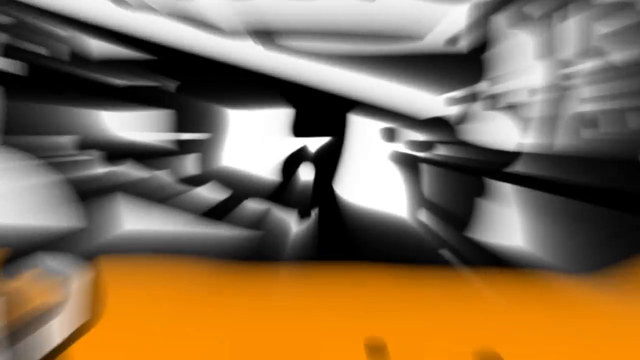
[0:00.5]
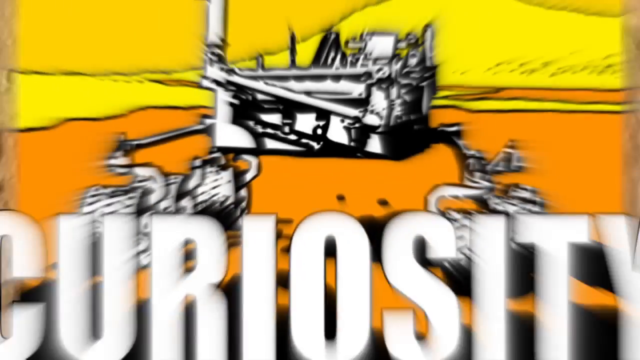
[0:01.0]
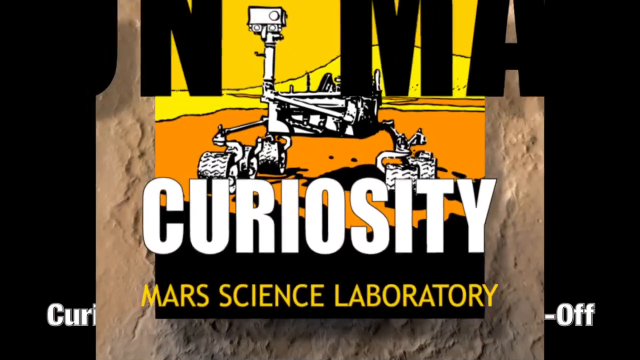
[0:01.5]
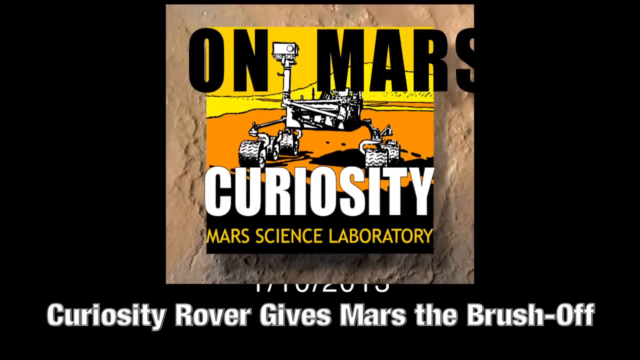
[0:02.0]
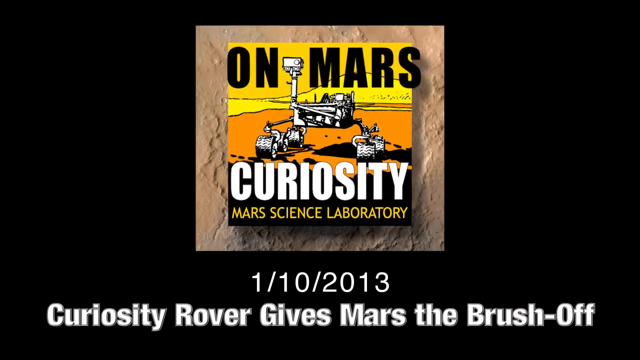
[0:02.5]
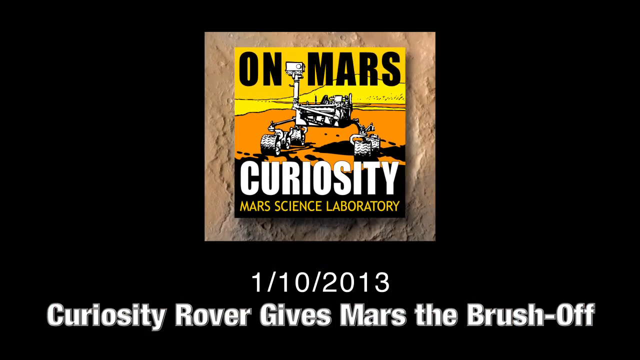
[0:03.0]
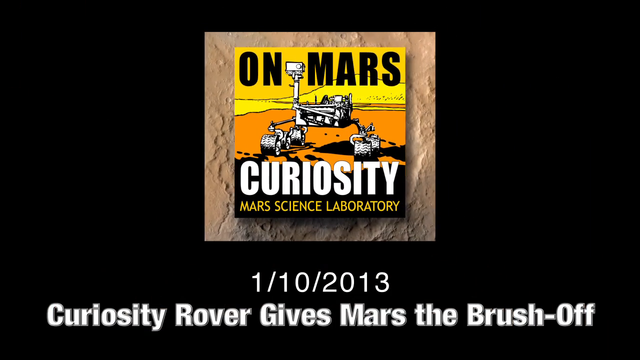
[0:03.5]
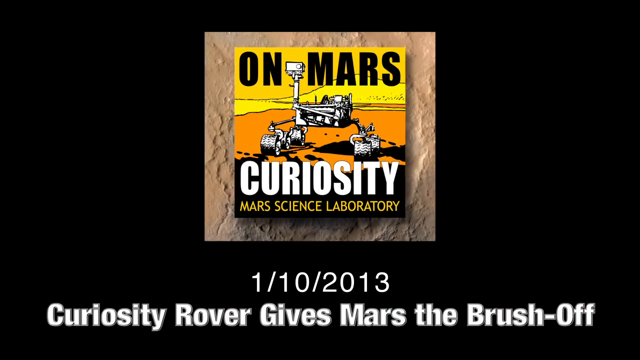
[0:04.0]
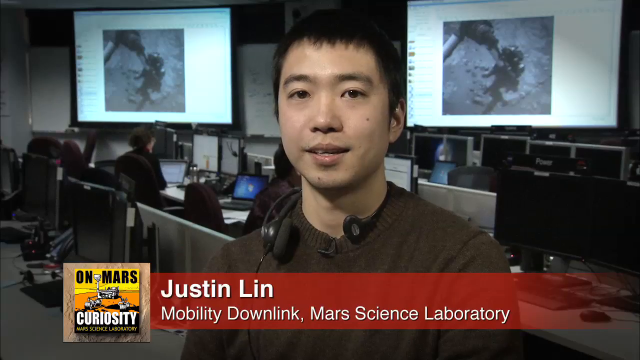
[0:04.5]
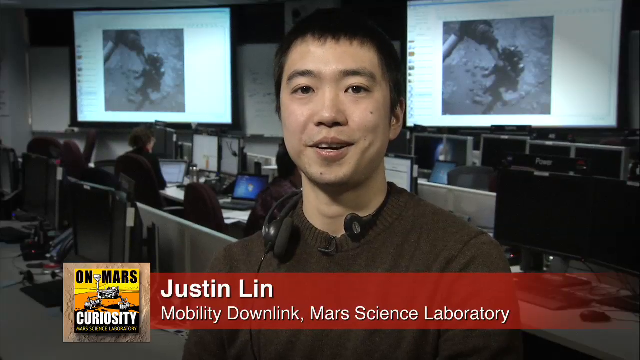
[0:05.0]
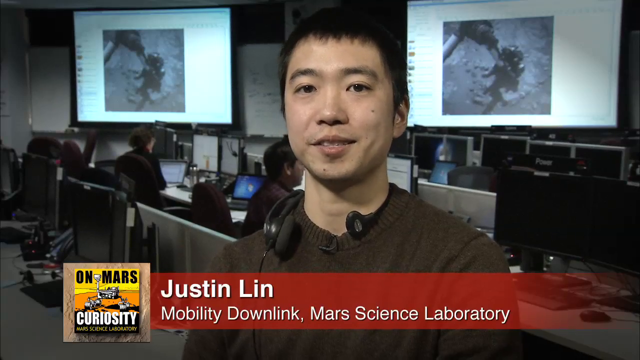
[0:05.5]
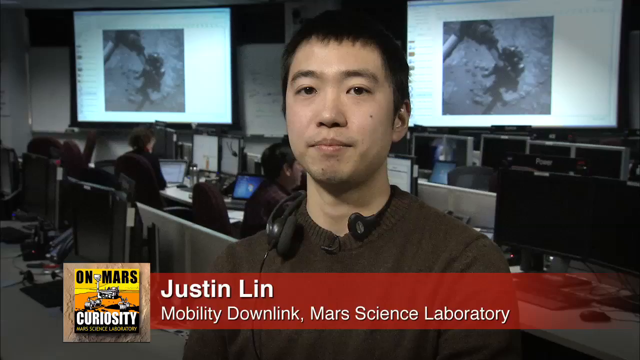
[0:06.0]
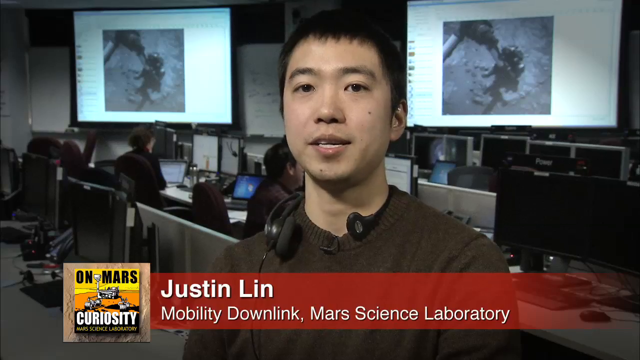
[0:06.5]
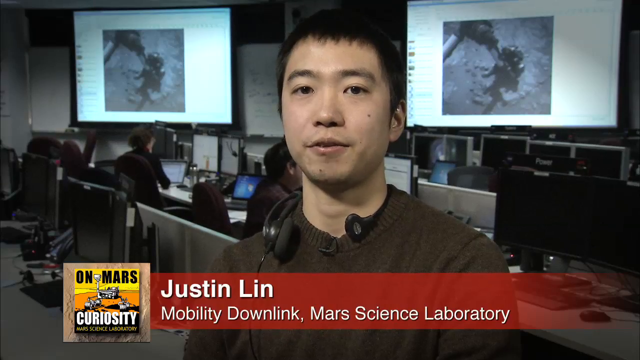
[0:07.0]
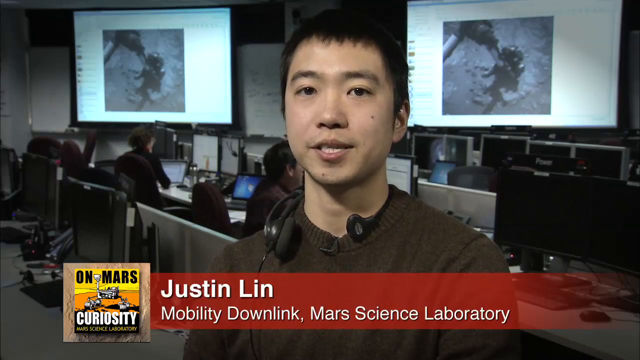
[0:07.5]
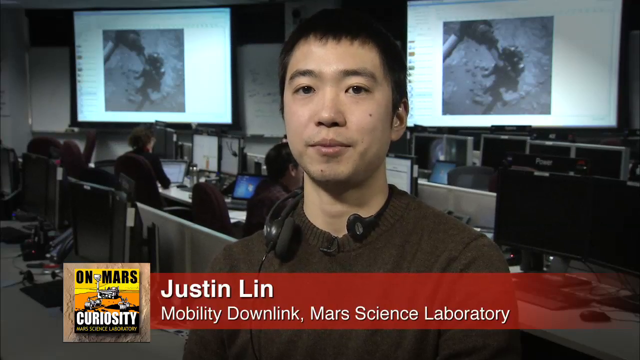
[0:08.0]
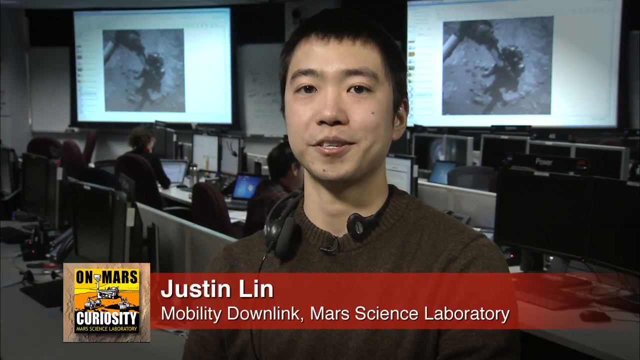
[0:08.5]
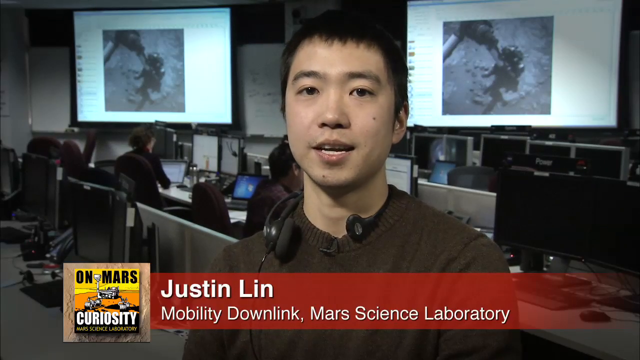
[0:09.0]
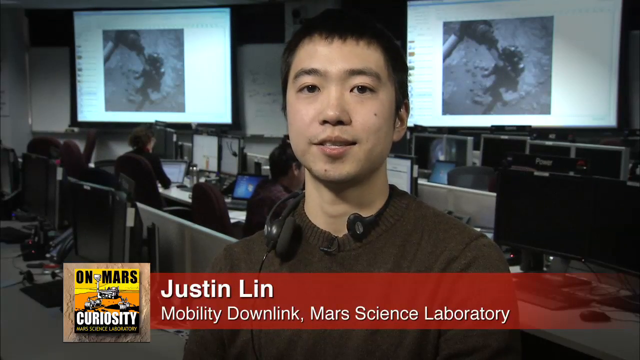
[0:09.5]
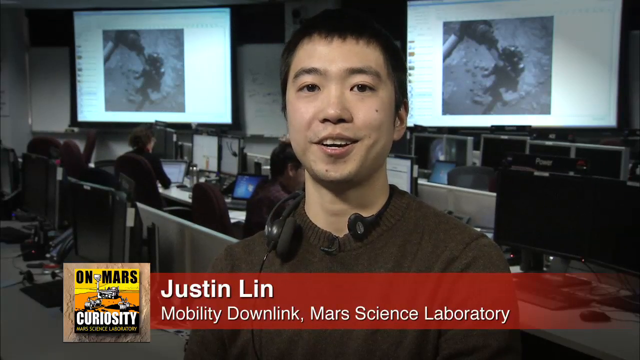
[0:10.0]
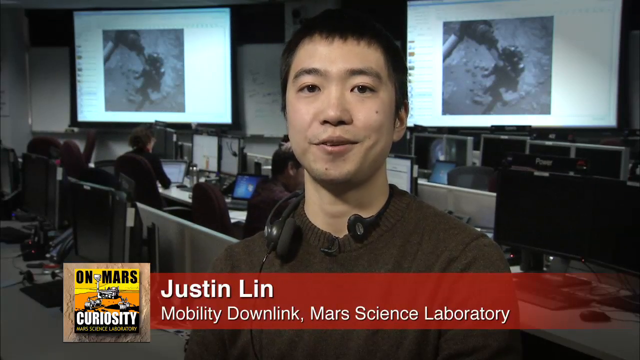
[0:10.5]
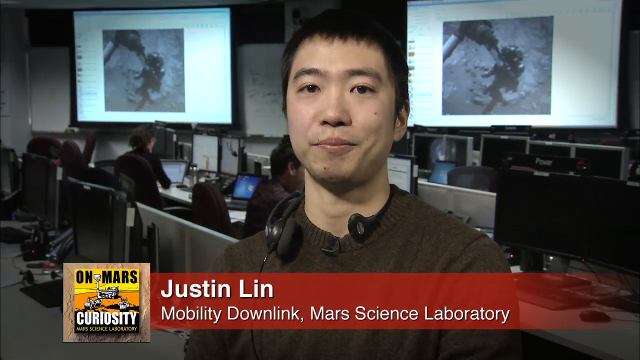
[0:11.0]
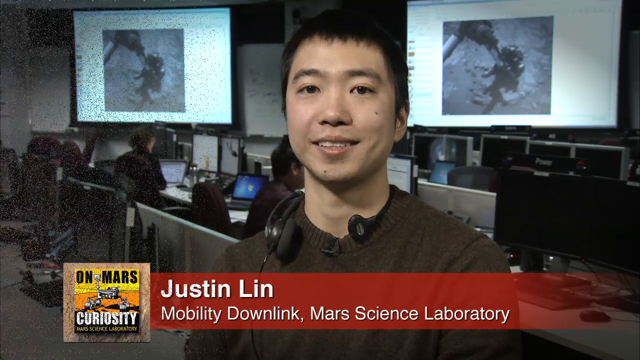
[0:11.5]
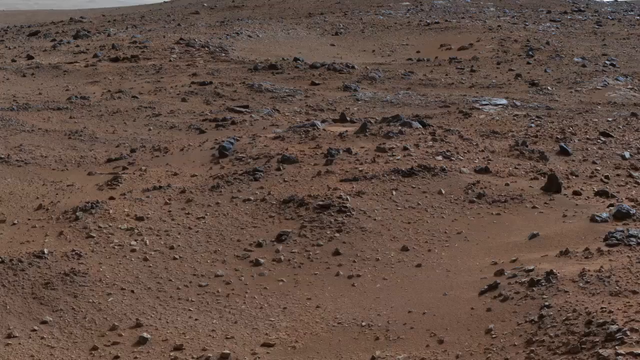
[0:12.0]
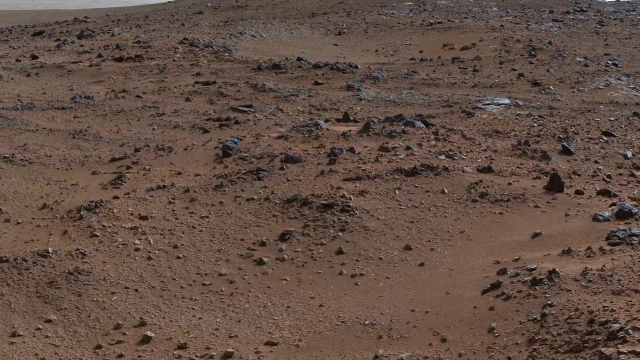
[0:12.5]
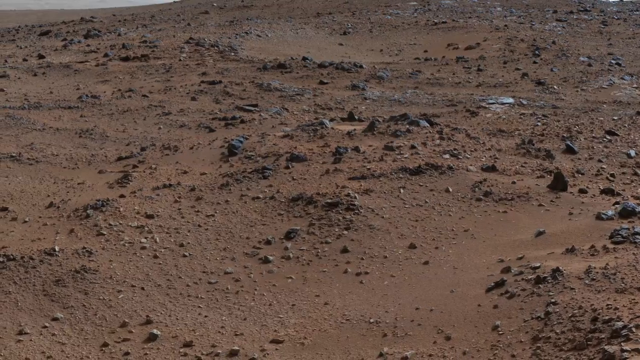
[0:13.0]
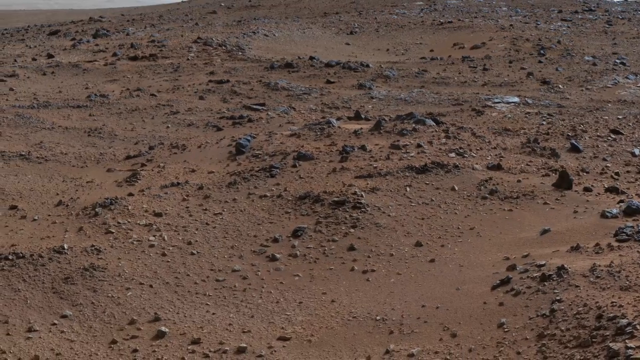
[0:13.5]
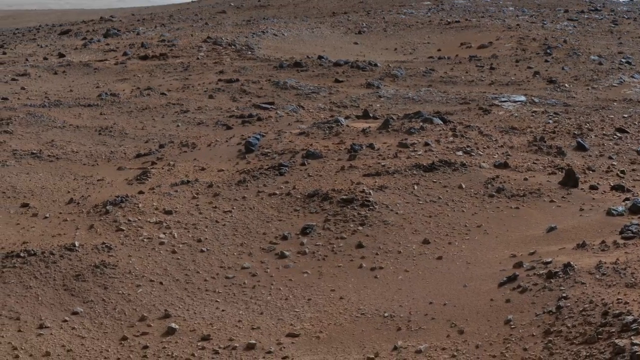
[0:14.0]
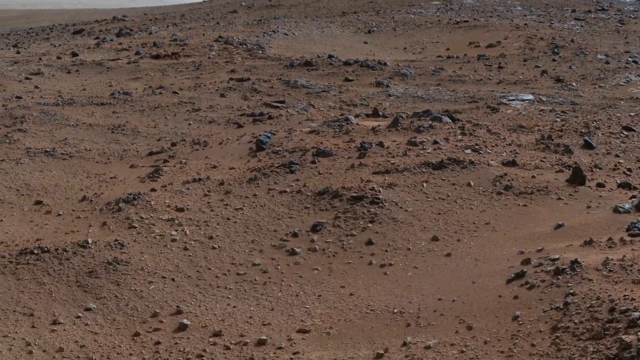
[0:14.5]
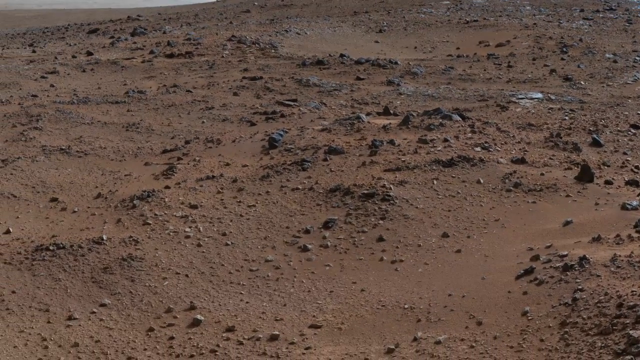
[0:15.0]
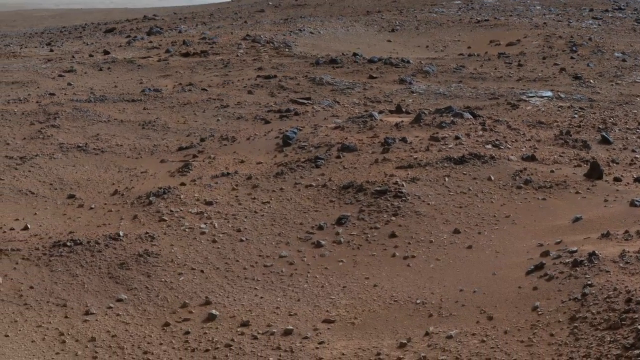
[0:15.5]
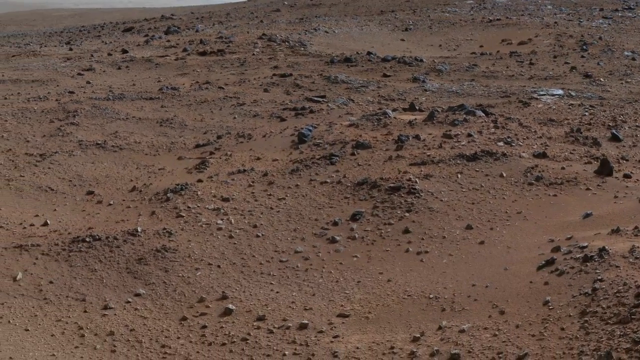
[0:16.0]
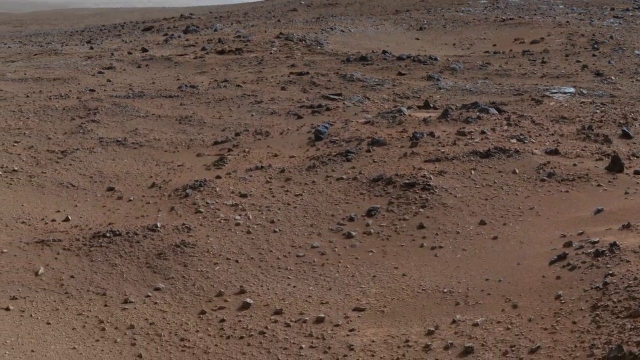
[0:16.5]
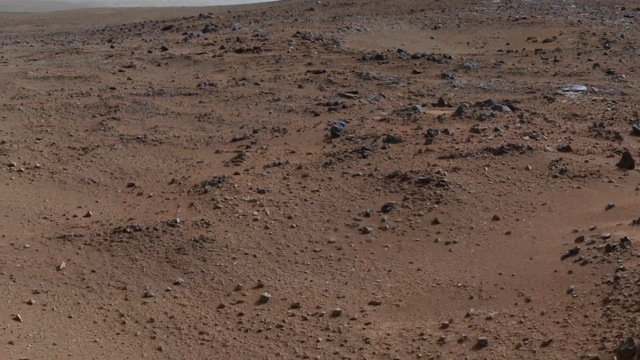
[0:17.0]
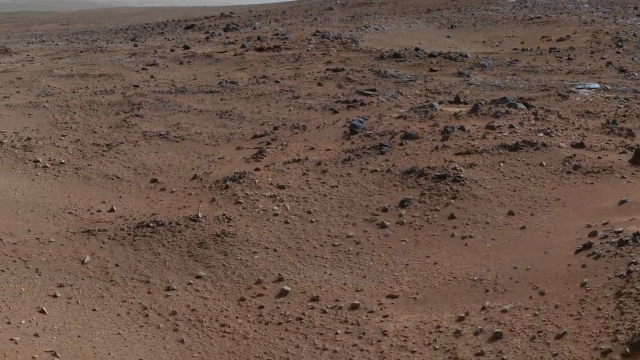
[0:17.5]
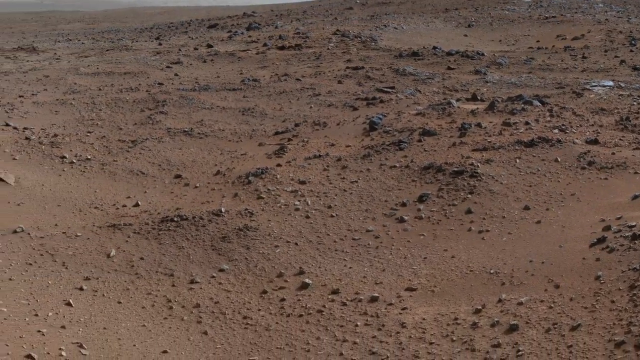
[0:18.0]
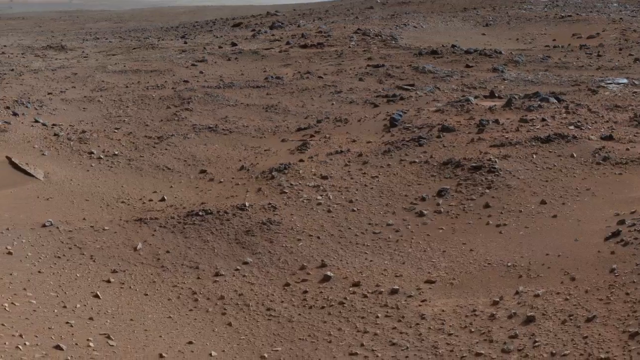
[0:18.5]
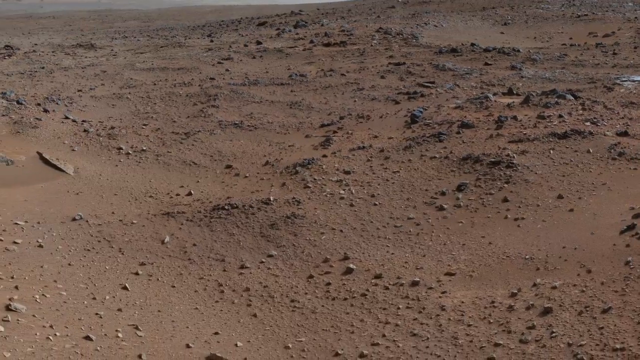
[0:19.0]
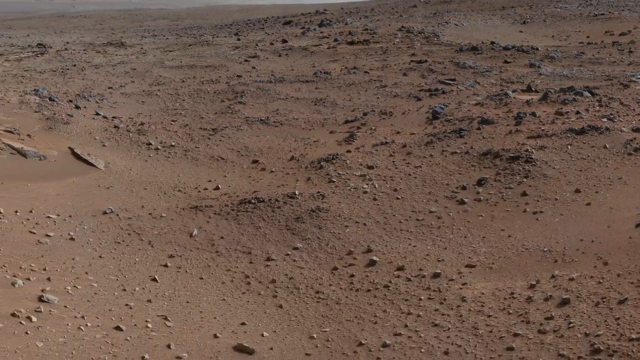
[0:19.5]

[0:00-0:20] This is a Curiosity rover report from January 10th, 2013, titled giving Mars the brush off. Justin Lin is introduced as part of Mobility Downlink at the Mars Science Laboratory. He is talking, has a headset around his neck, and wears a dark brown sweater; he appears to probably be Asian. The video shows the surface of Mars, with a lot of brown rocks everywhere. Behind Justin is a bunch of monitors and two pull-down projector screens showing pictures of the rover, or pictures the rover has taken on Mars. Two of his colleagues are behind him, working on something.